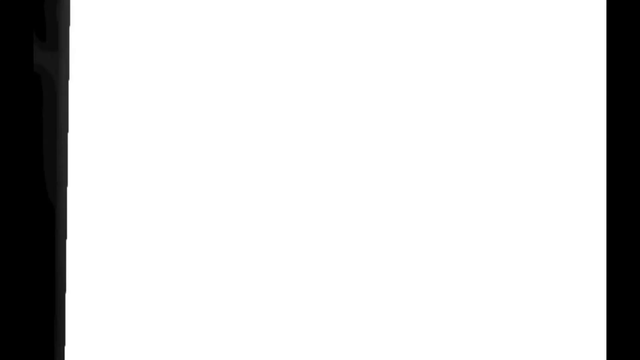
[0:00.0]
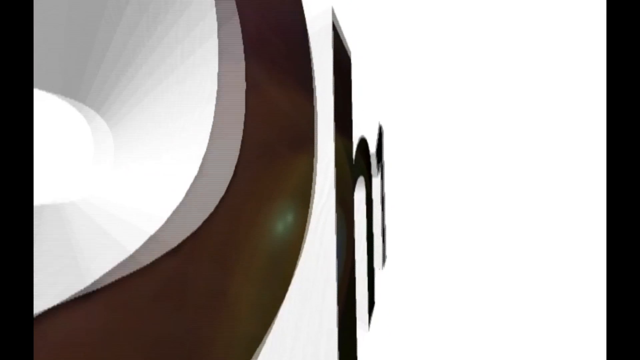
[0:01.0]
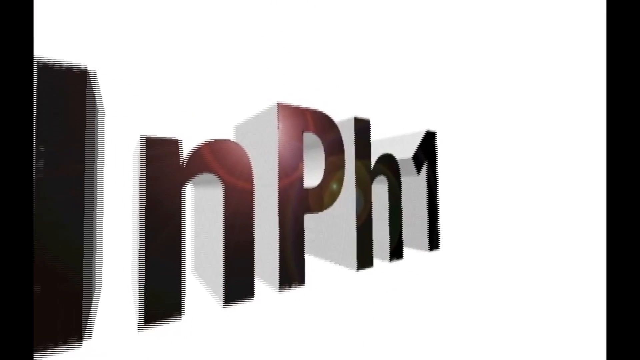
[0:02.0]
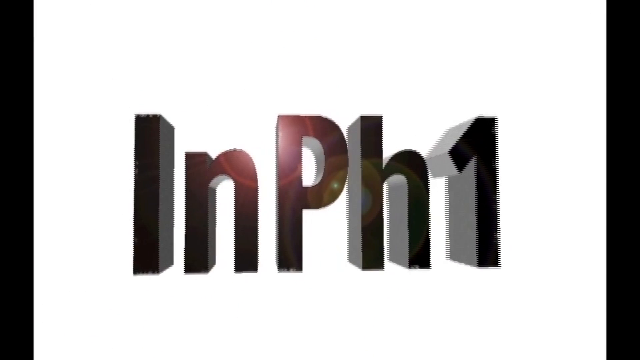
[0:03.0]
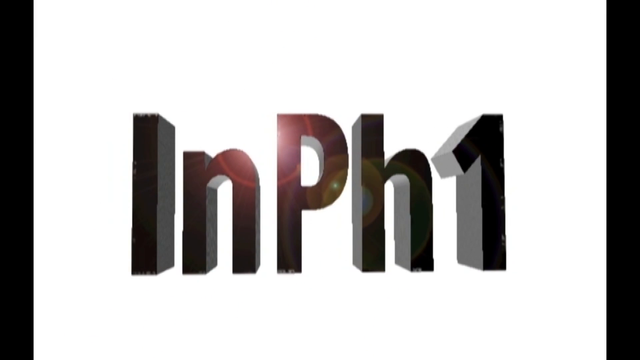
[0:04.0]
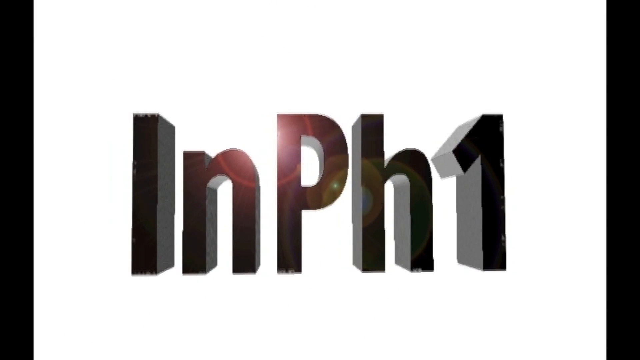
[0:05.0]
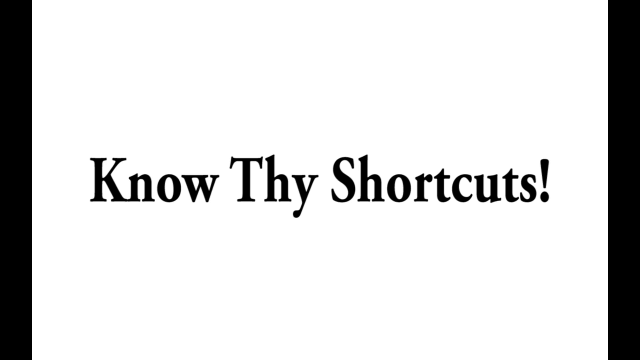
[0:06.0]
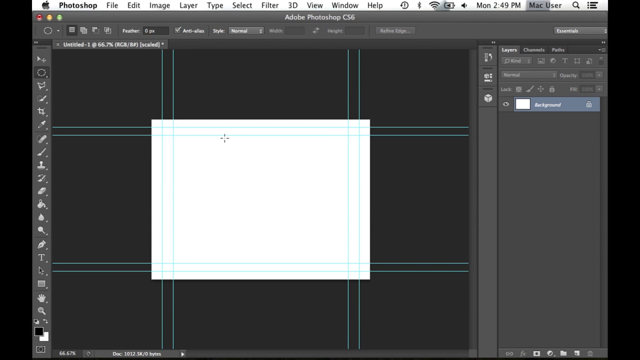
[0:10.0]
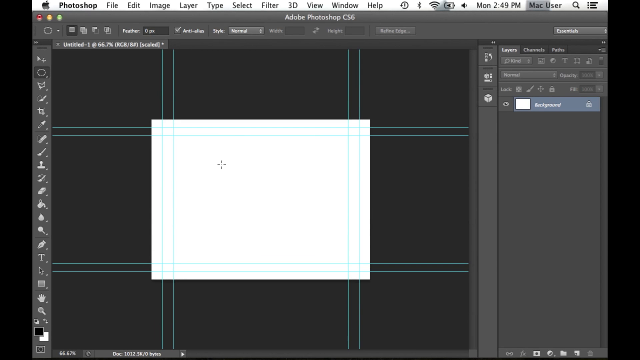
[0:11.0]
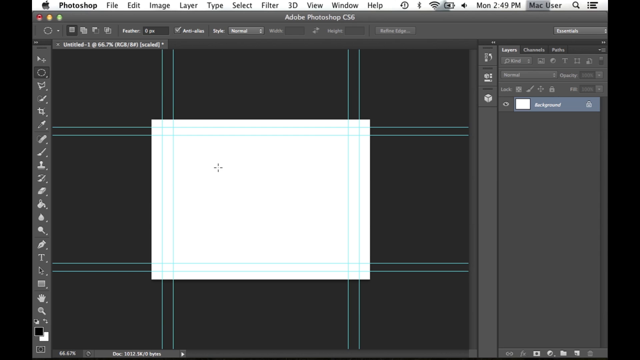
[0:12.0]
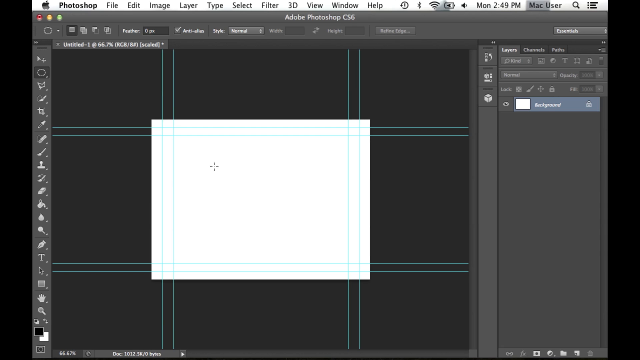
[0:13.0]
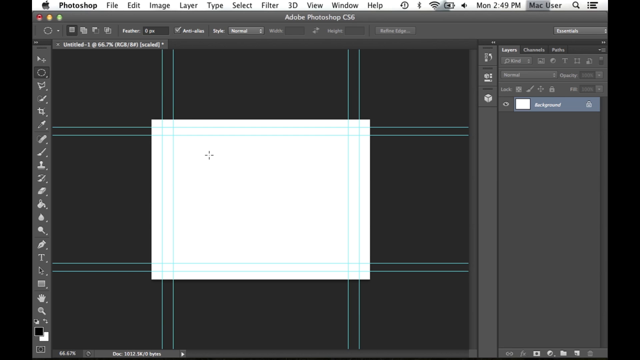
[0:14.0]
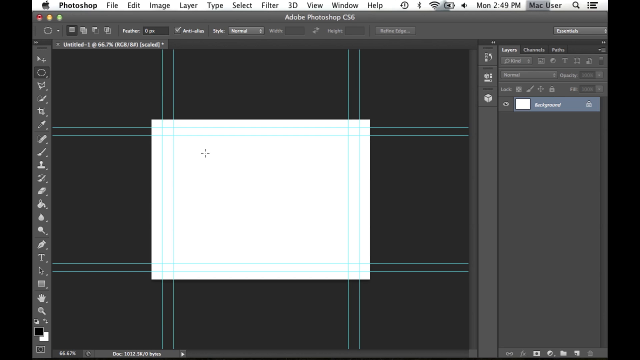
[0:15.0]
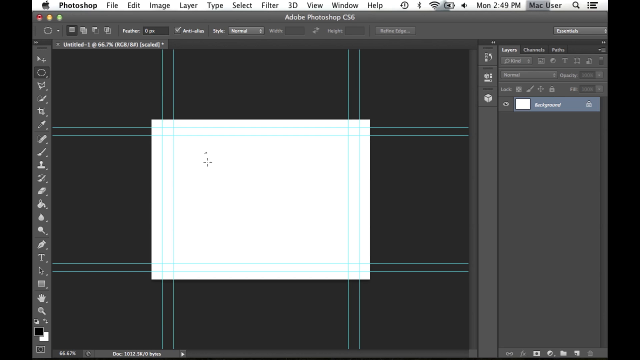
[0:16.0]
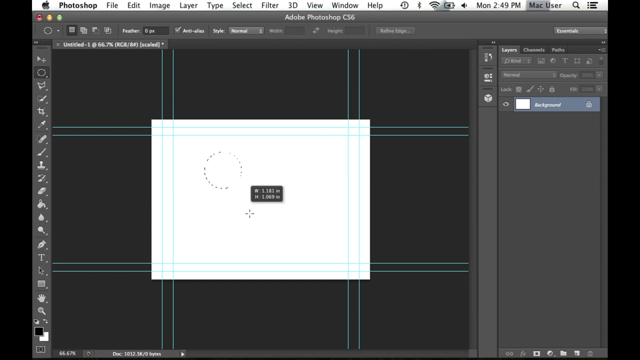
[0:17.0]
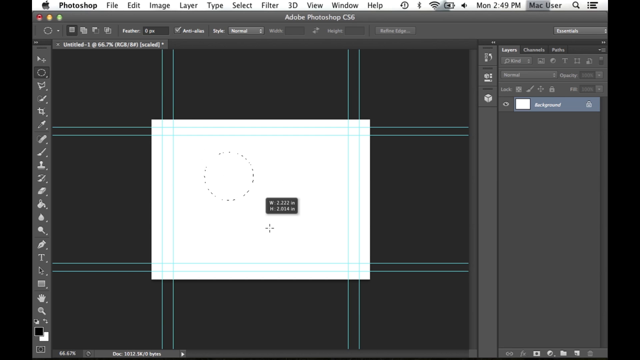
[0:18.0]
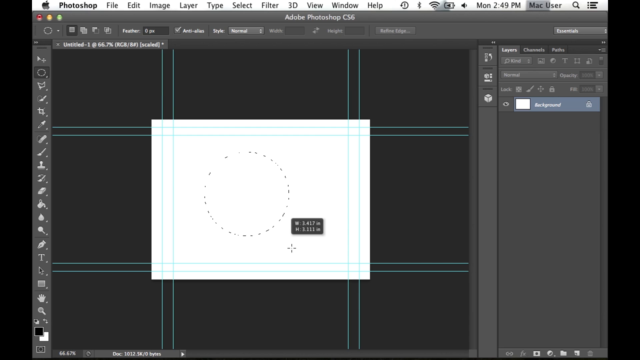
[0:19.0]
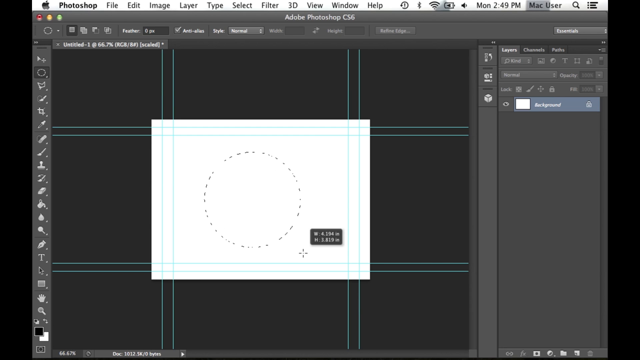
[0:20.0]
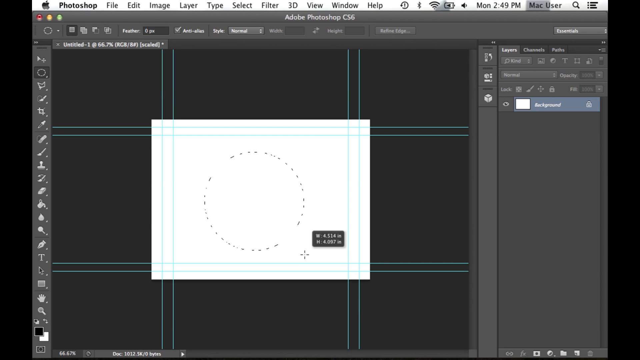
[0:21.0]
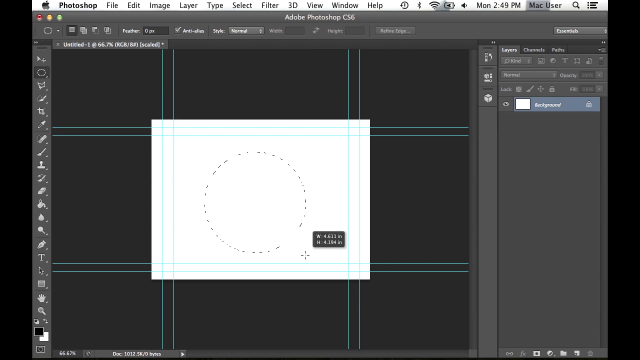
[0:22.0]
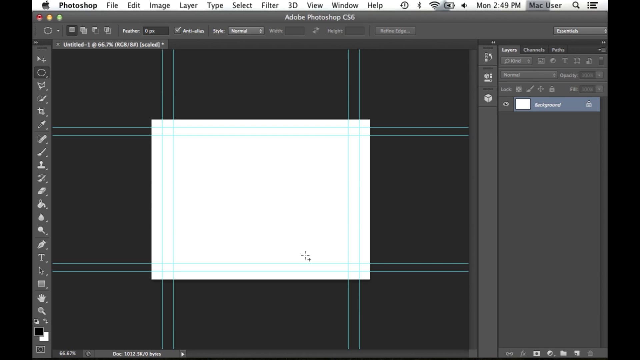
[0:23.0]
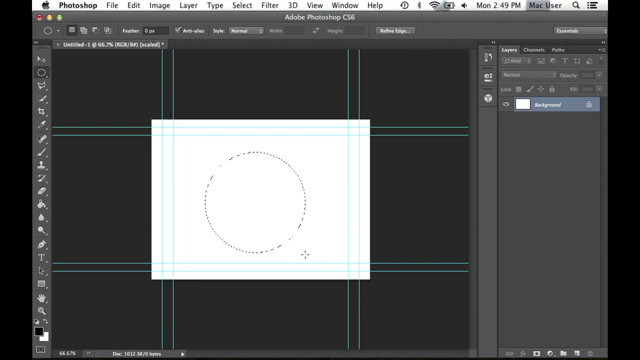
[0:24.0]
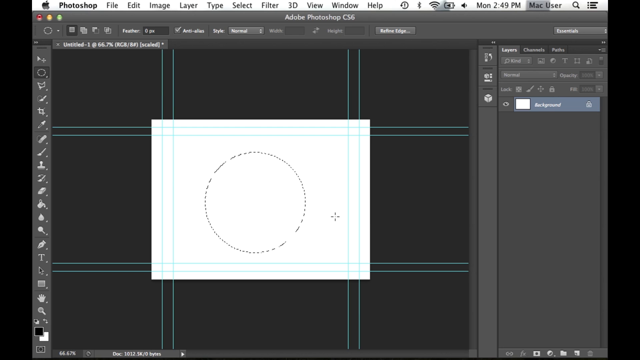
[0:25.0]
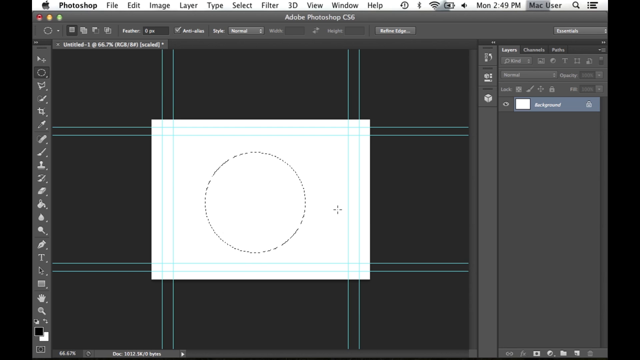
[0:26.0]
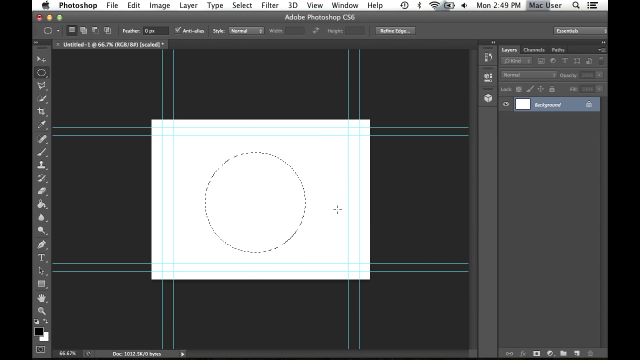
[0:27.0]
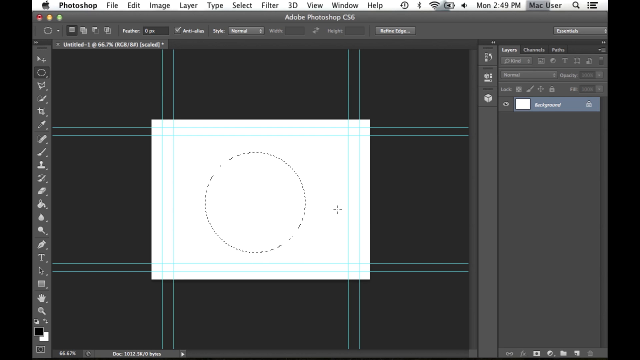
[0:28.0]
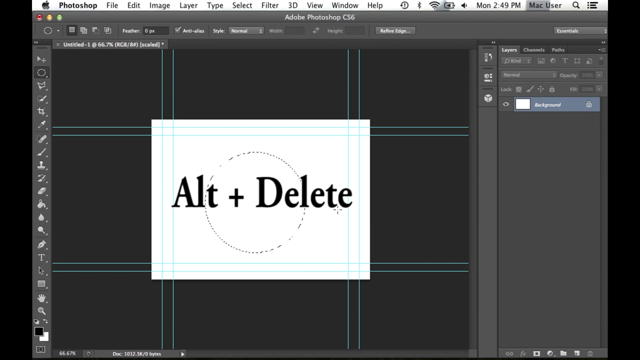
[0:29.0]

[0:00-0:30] The video is a little wider than it is tall and is letterboxed by a little on the left and right, about 5% on each side. The background in the center is white. At the very beginning, block letters roll in; they are black with gray on their left and right edges, and they read "INPH1". A glare rolls along the top left of the letters. The slide then switches to "know thy shortcuts" in all black. Next, someone's Mac desktop appears. At the very top is the Apple icon, followed by "Photoshop", apparently indicating that Photoshop is open, and then the menu: file, edit, image, layer, type, select, filter, 3D, view, window and help. The time appears to be Monday at 2:49 PM. Below, there seems to be a blank presentation: basically a black grid in the background with a white square in the center.